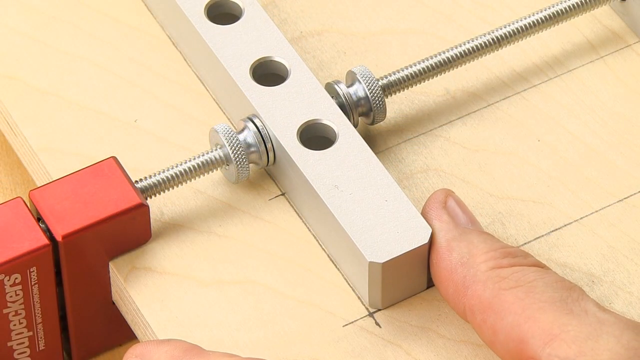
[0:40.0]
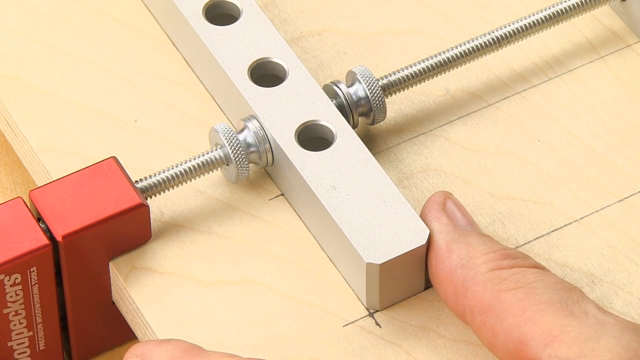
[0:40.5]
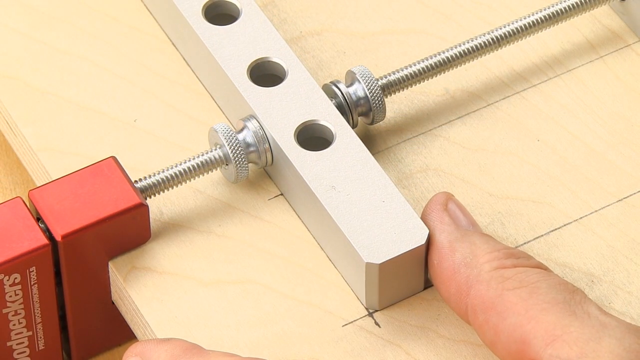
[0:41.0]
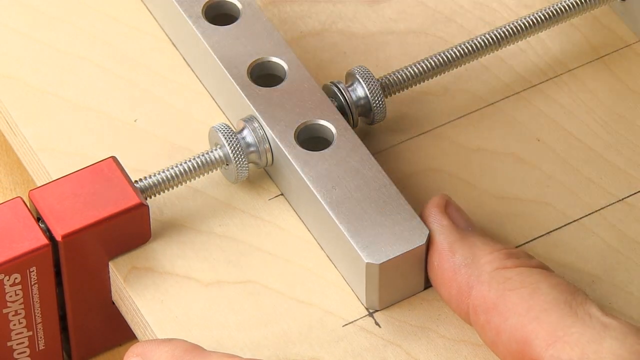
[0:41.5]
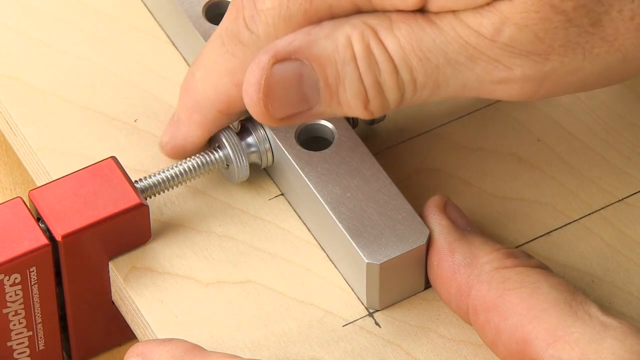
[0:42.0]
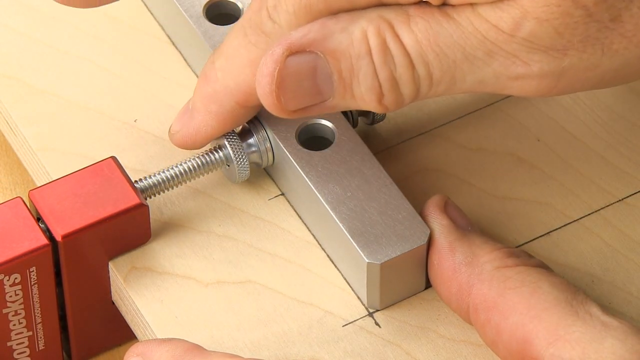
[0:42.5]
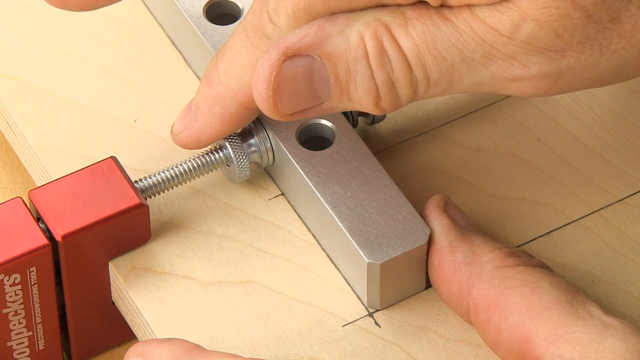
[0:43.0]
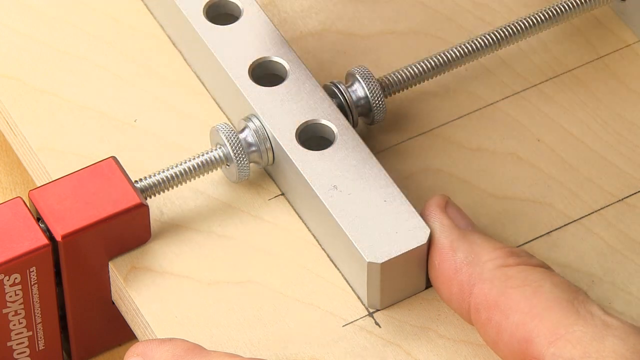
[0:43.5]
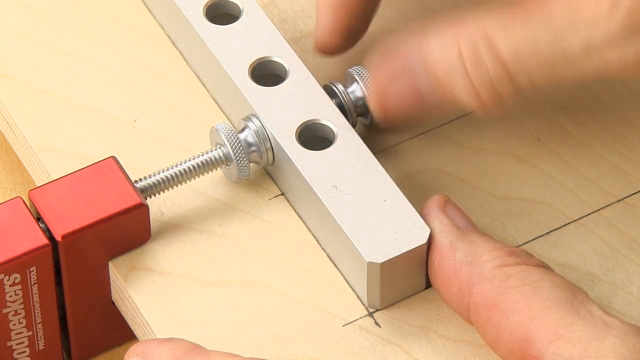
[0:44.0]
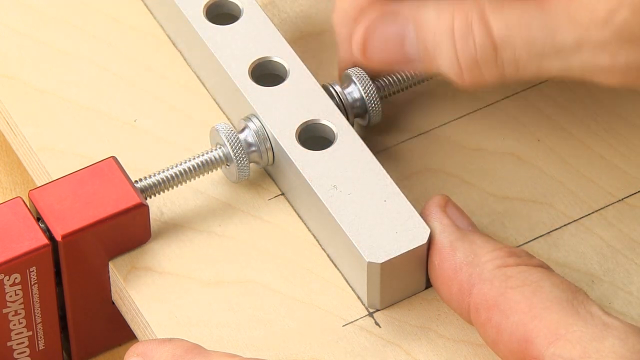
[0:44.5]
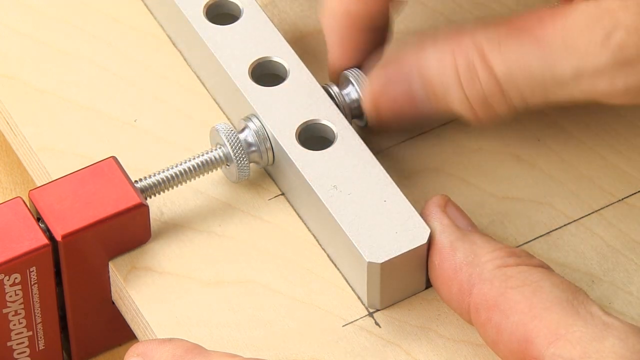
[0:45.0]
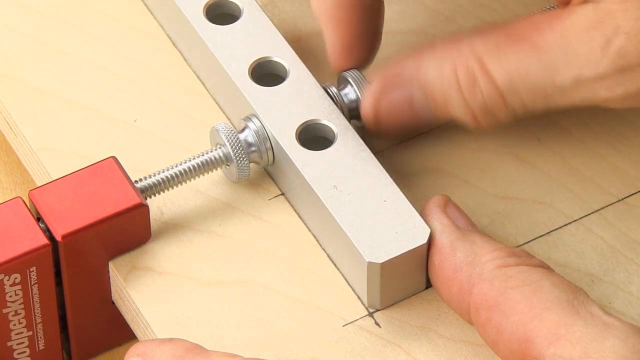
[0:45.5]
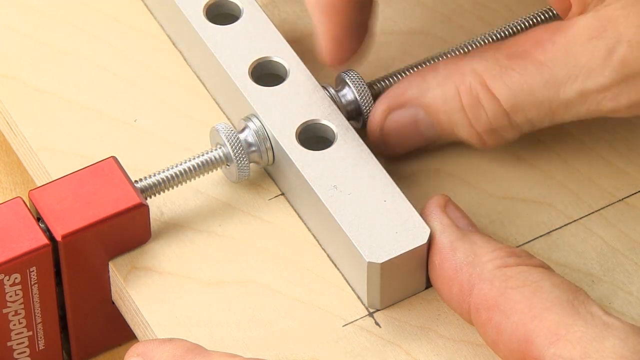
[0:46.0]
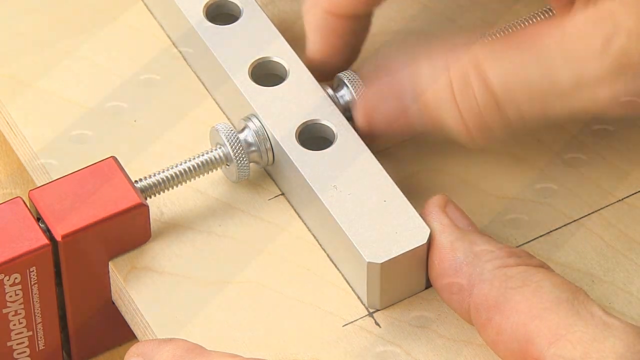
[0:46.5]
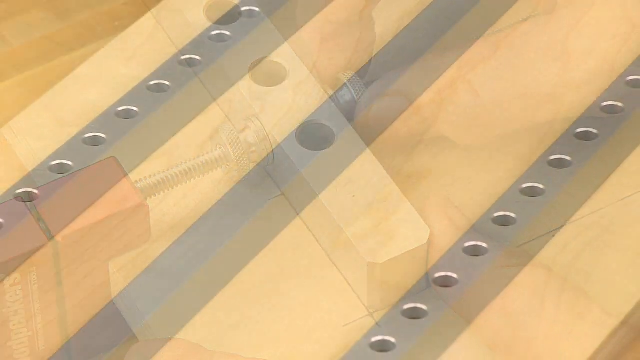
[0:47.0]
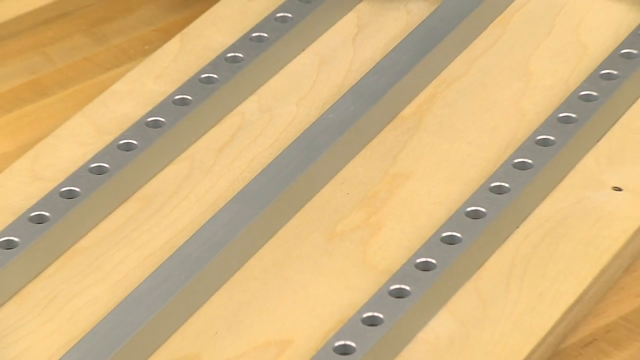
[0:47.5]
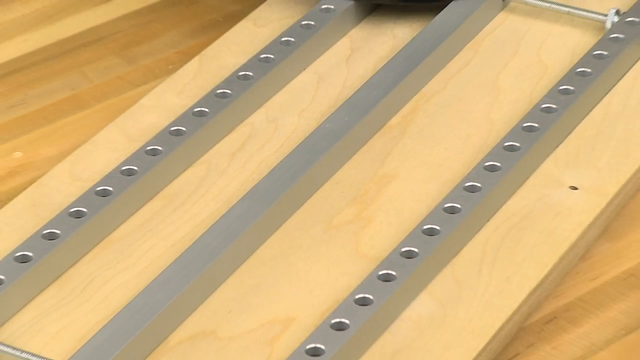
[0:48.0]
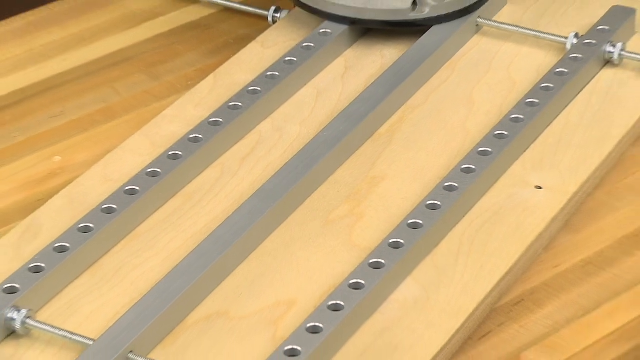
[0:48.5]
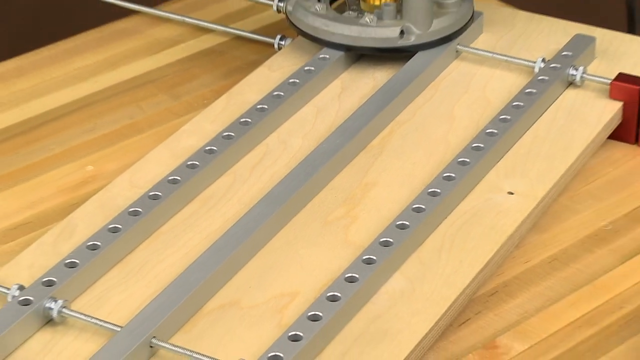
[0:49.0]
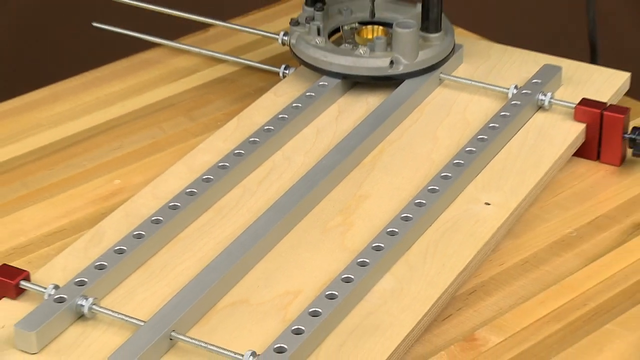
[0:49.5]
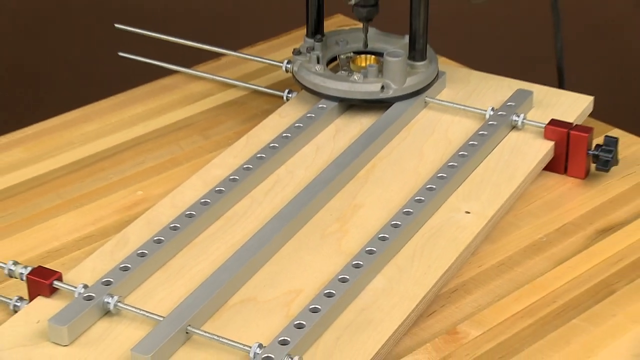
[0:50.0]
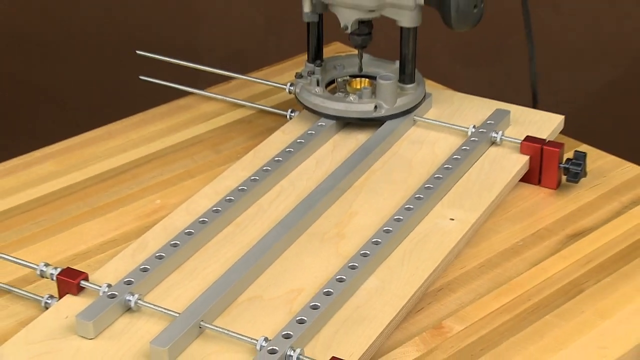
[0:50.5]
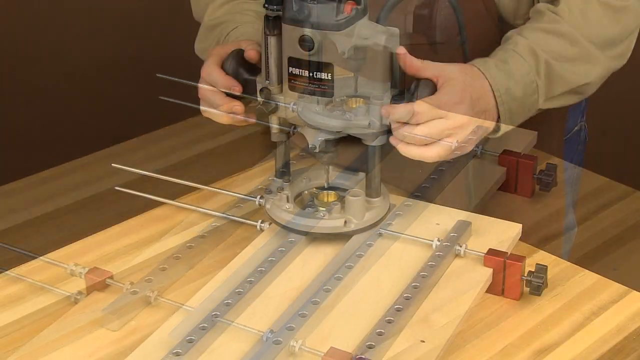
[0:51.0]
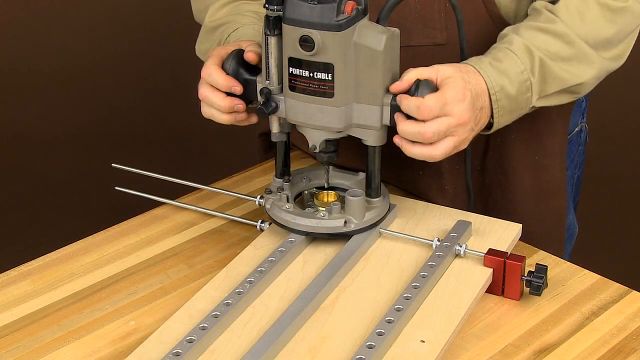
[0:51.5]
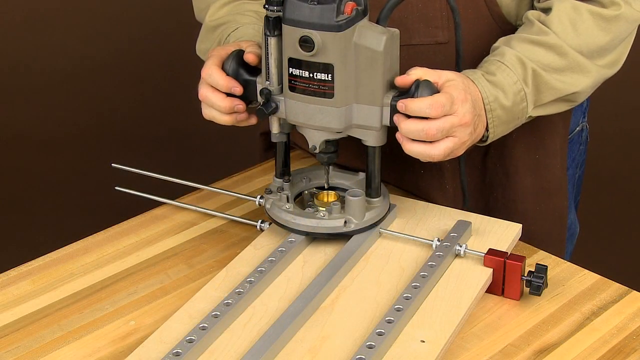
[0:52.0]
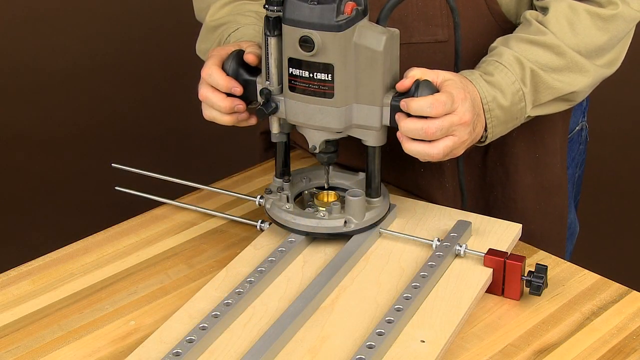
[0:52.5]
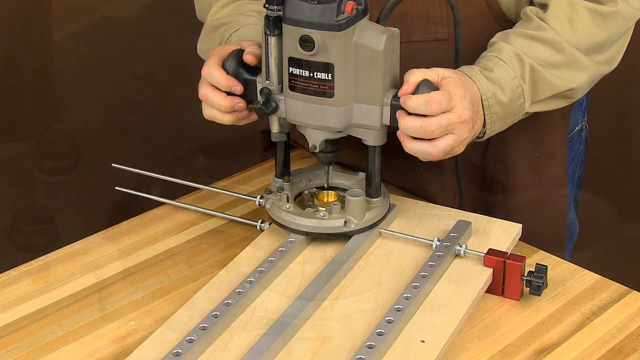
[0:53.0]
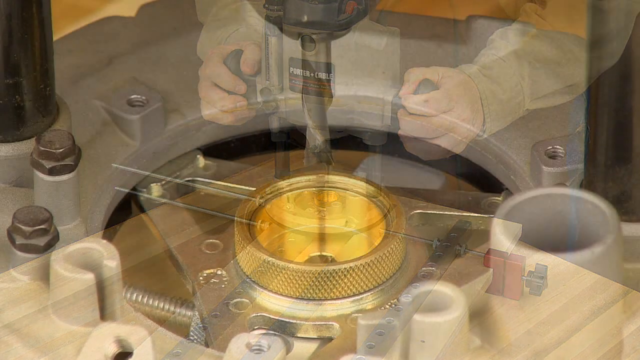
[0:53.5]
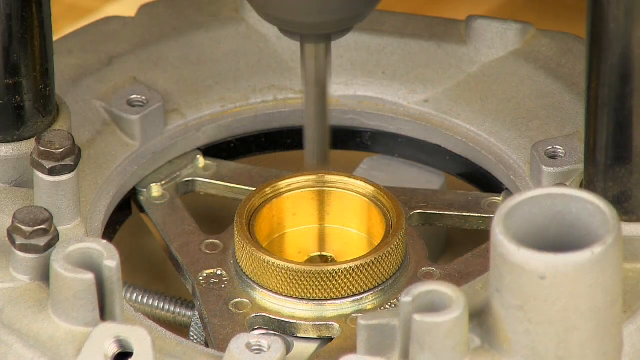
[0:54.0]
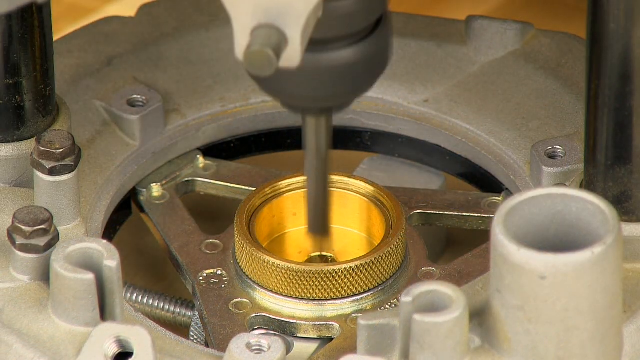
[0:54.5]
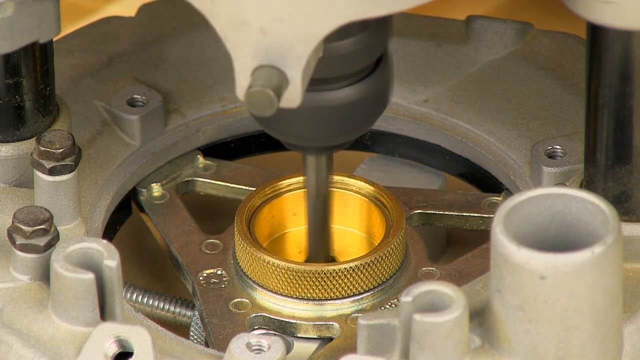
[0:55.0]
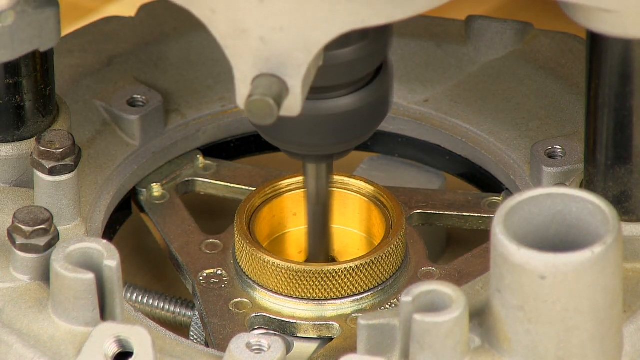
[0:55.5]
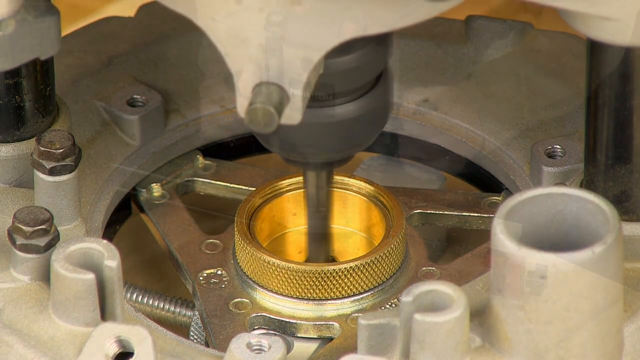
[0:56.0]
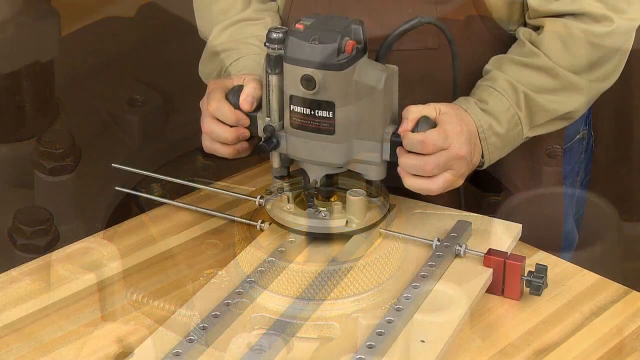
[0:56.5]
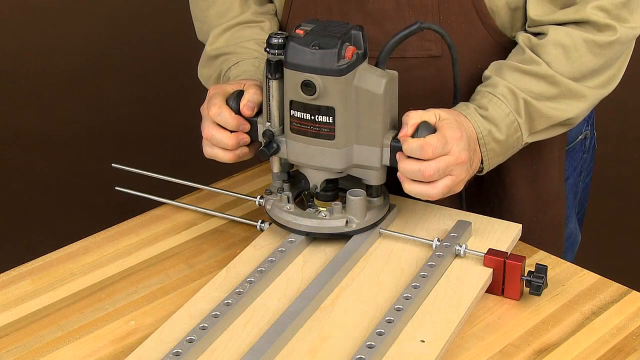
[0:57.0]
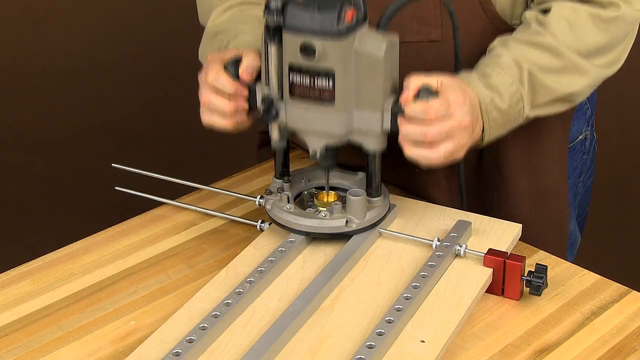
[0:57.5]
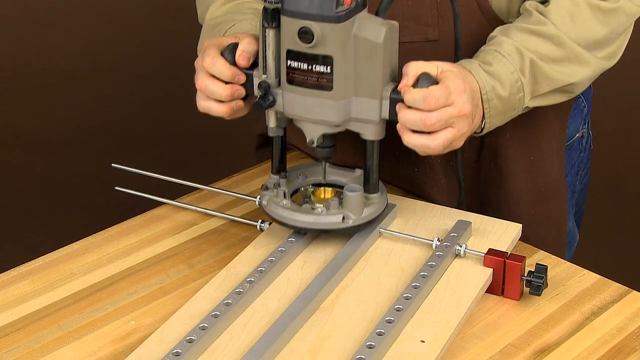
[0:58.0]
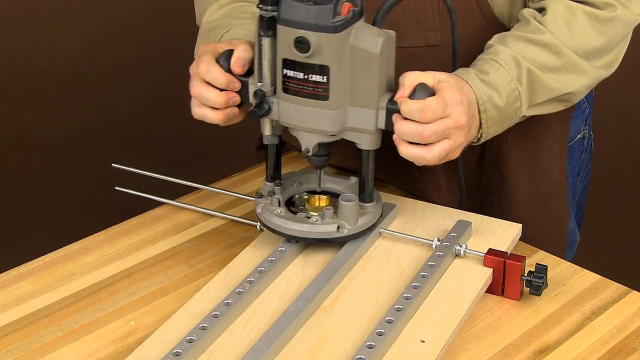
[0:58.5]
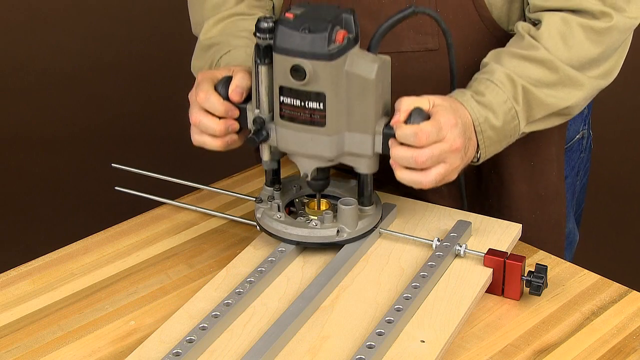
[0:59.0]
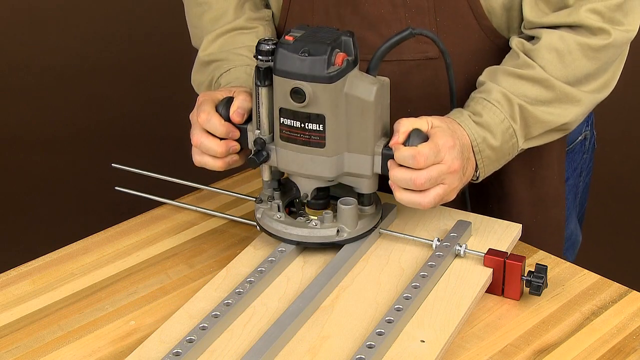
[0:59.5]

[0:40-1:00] In a close-up, a man's hands seem to refine how the jig is set up on top of the piece of plywood that was drawn on. He has what looks like a press drill over the top of the jig and uses it to drill holes where the jig has been placed on the wood. This short section repeats: the silver portions on top of the wood, and him drilling through the holes on the jig, pressing straight down, moving the drill, pressing straight down and moving it again. A close-up shows how he tightens the jig into place with some silver screws, and at one point the drill going through is shown really close up. The logo is in the bottom right corner: a red square with "woodpeckers" in white on the diagonal. Everything is set on a light brown wood table. The man is white, wears a brown apron and a green shirt, and his skin looks a light brown tan pink.